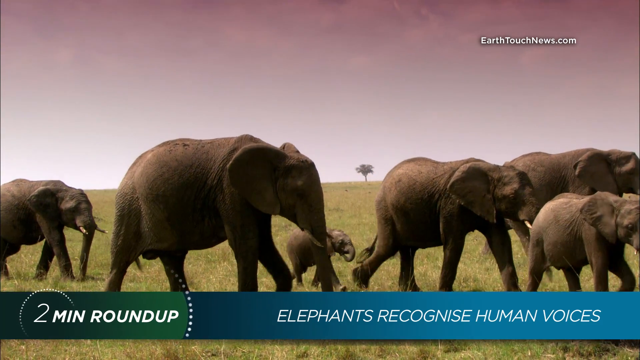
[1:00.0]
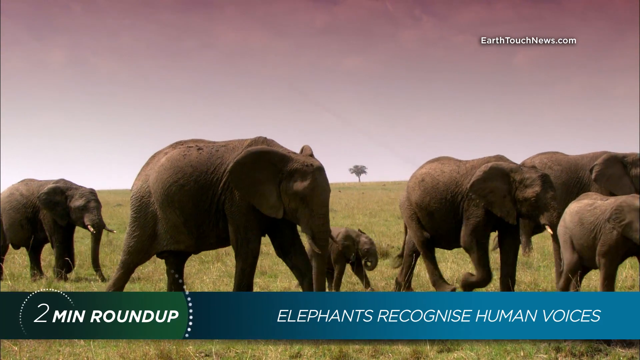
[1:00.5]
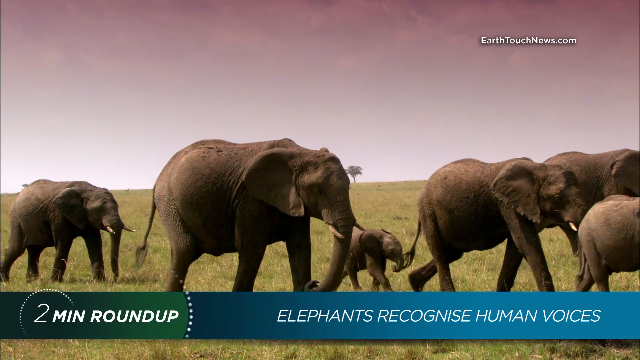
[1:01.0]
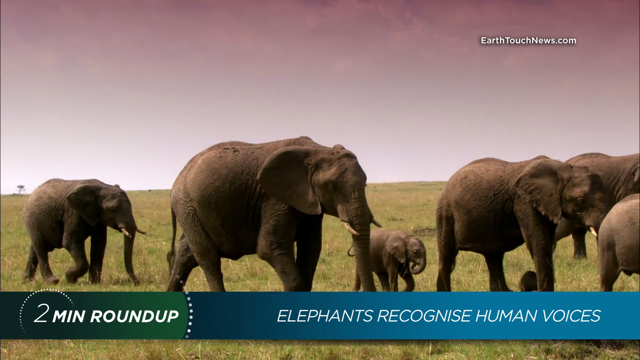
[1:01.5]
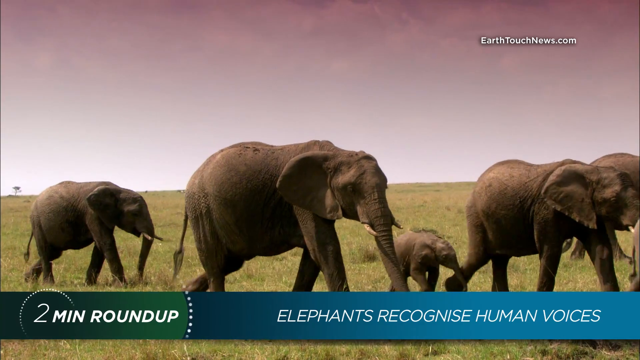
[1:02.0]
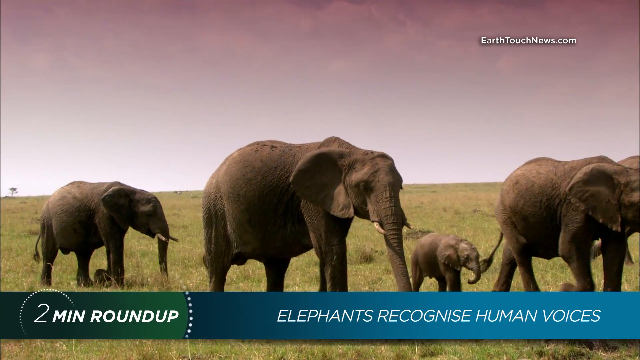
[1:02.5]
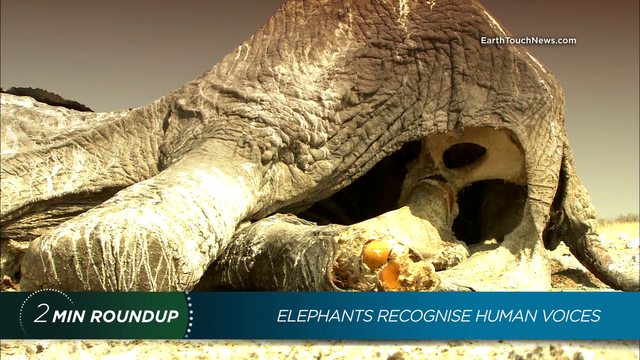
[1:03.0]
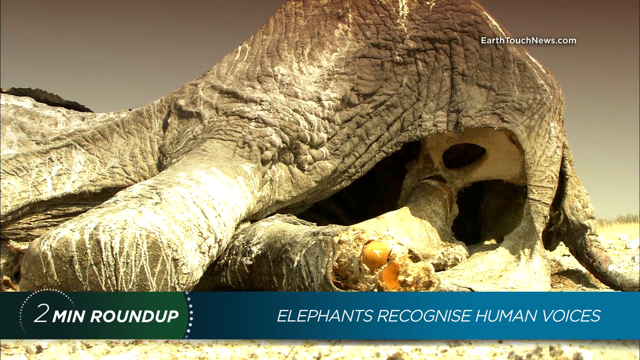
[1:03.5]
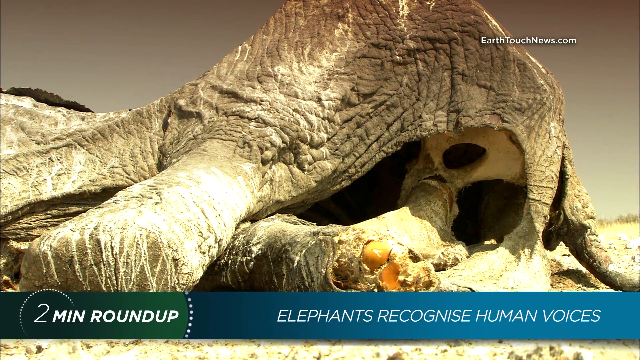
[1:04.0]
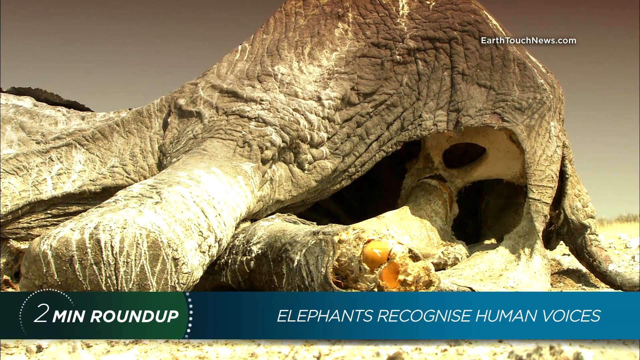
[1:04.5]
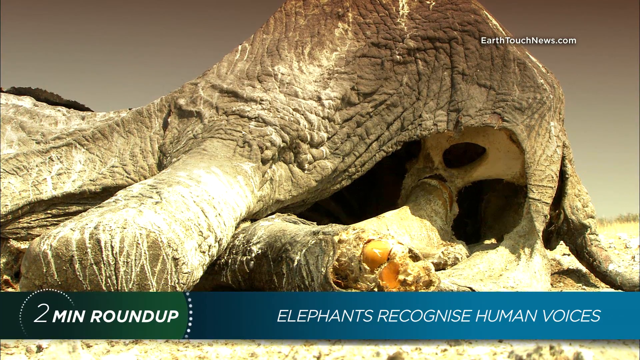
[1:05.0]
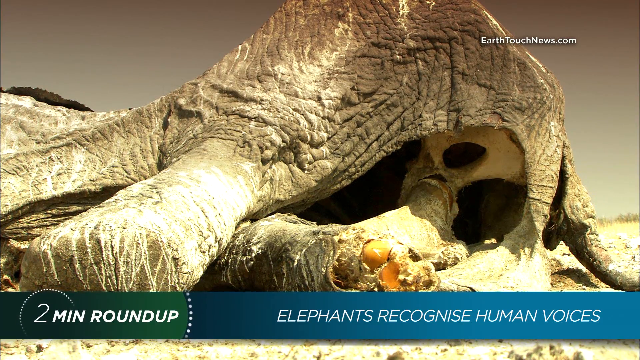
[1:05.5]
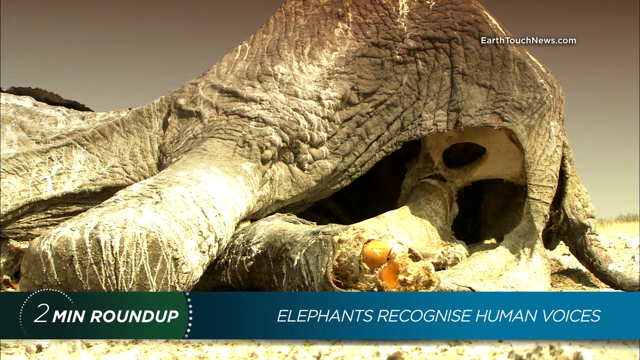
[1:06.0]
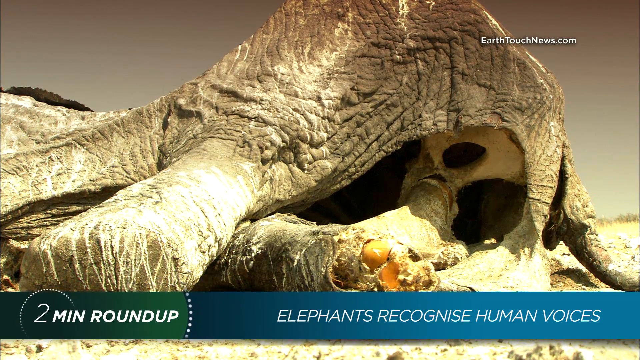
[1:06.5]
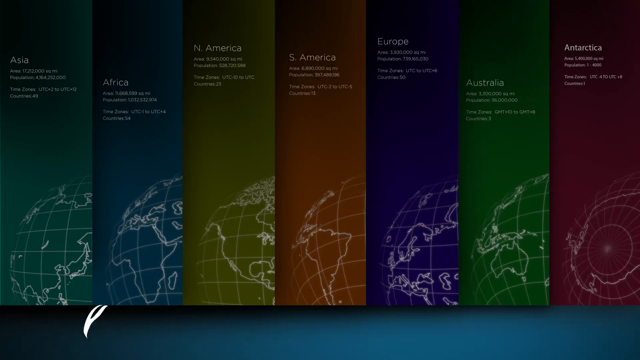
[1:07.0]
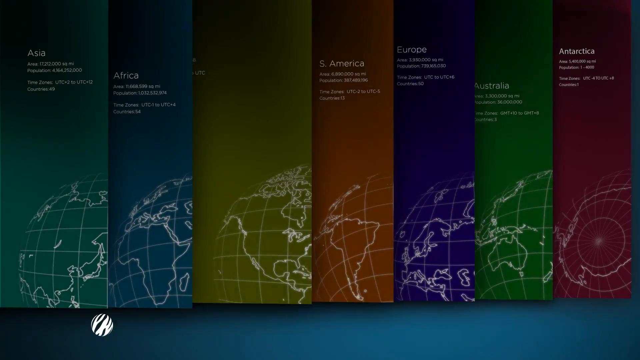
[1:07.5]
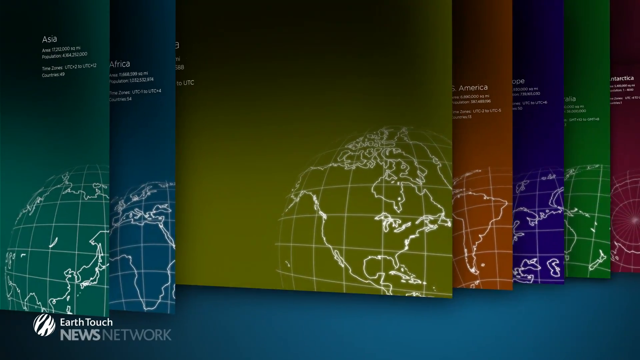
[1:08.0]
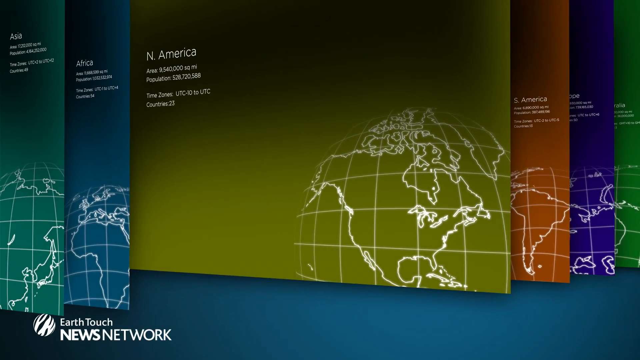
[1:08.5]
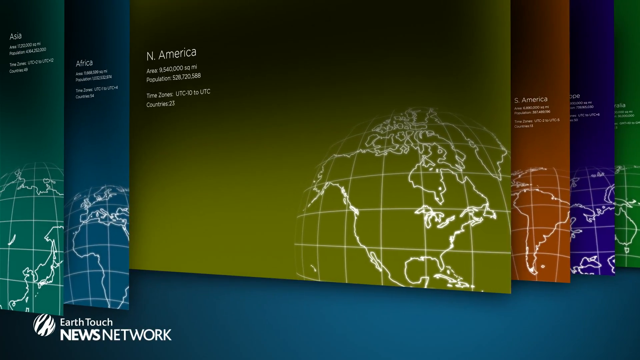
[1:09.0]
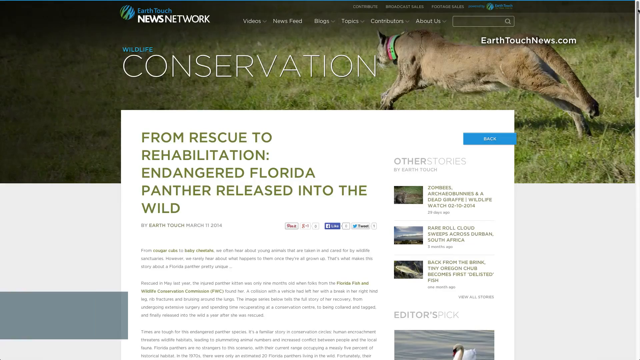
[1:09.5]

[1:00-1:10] A group of elephants of varying sizes, small baby elephants, medium-sized elephants and larger ones, walks together to the right. It is daytime, and the sky appears to have a kind of pink hue. They walk through green grass. At the bottom of the screen the text reads "two-minute roundup" and "elephants recognize human voices", and at the top right it reads "earthtouchnews.com". The elephants continue walking to the right. Next comes what appears to be an elephant carcass lying on the ground, with "two-minute roundup" still displayed and little circles going around the image. The video cuts to a segment showing different color-coded countries: Asia, Africa, Antarctica, Australia, Europe and North America. North America is in yellow, and that image pops up and widens. The video then cuts to a web page for a brief moment.